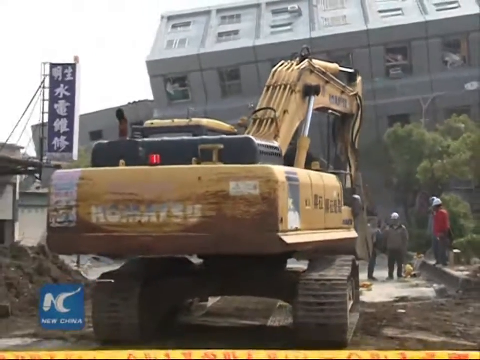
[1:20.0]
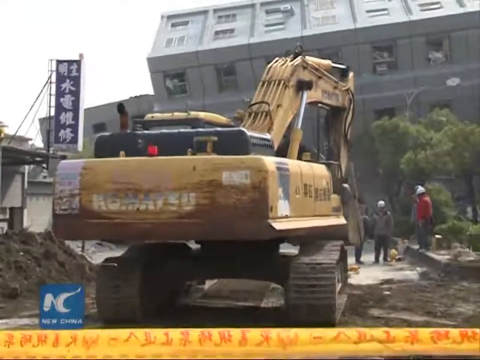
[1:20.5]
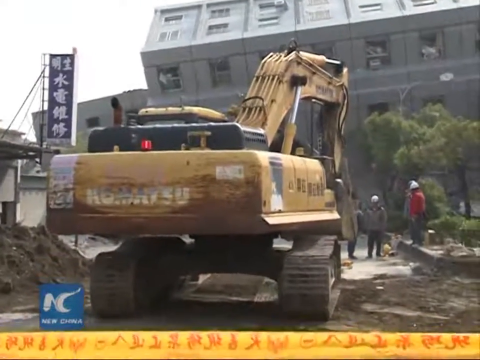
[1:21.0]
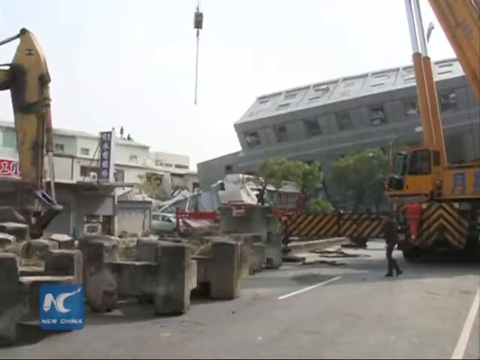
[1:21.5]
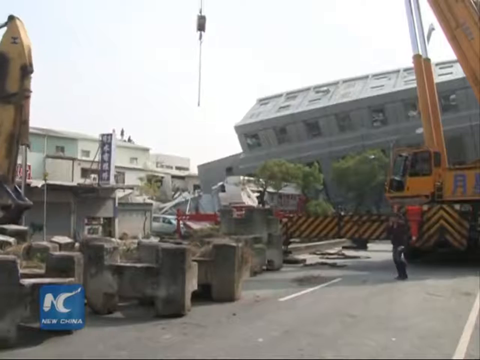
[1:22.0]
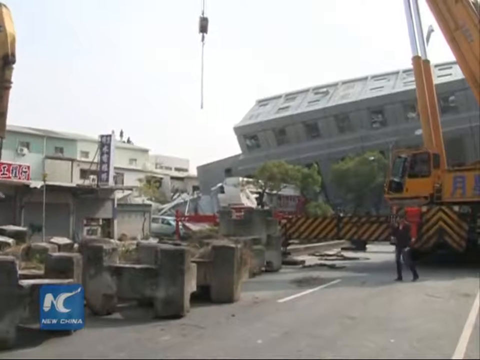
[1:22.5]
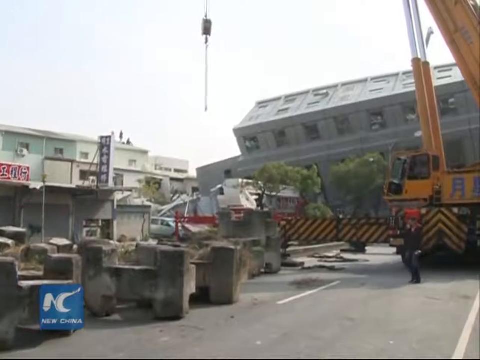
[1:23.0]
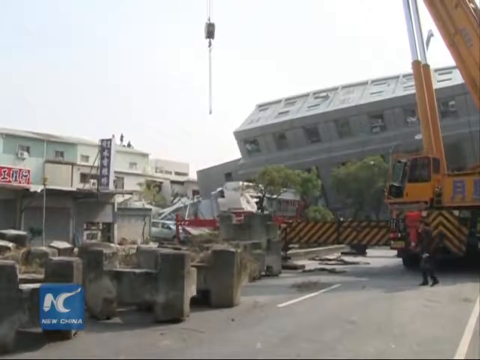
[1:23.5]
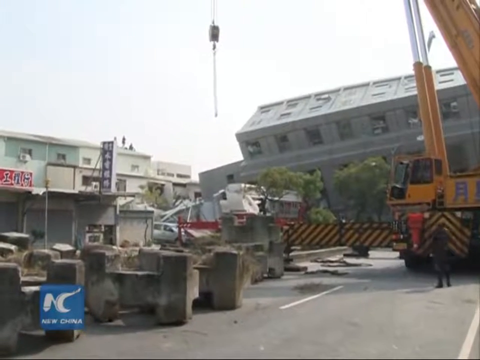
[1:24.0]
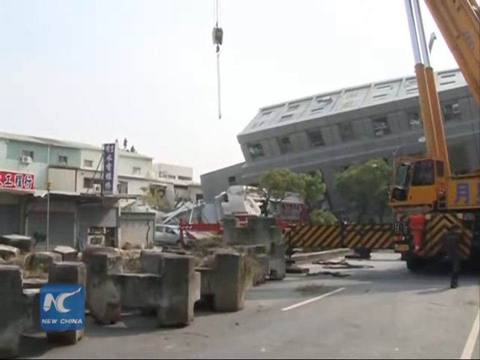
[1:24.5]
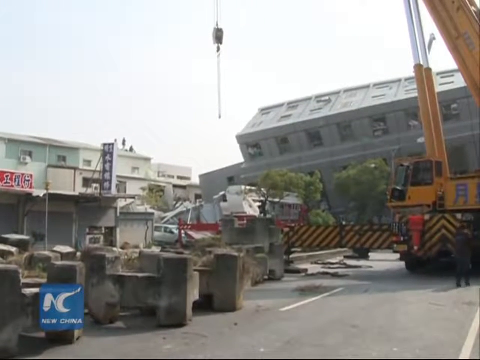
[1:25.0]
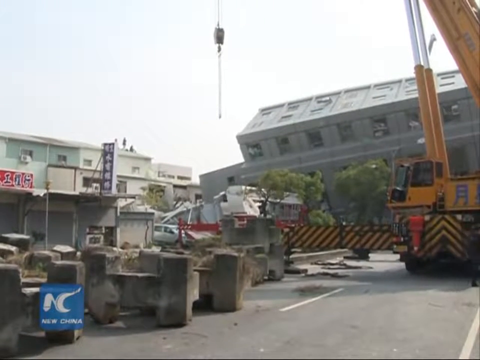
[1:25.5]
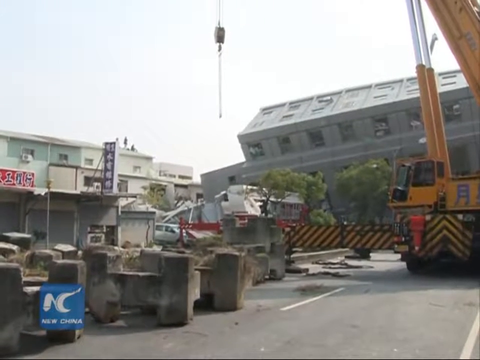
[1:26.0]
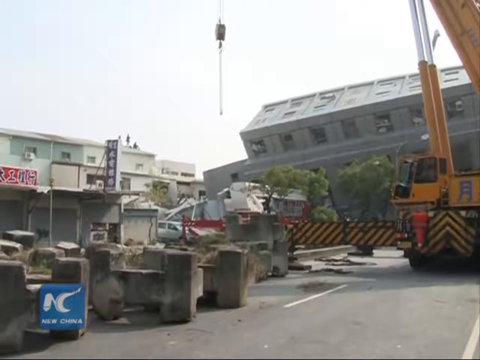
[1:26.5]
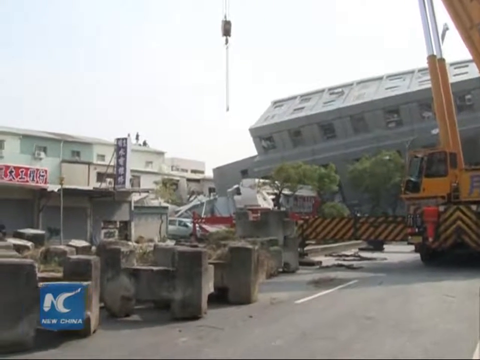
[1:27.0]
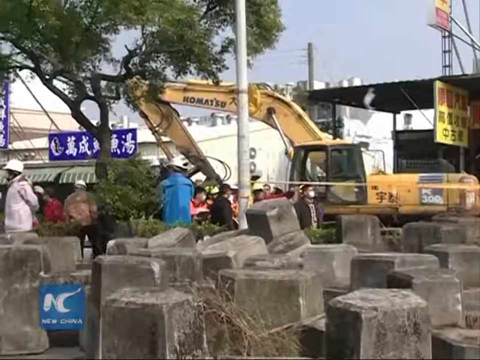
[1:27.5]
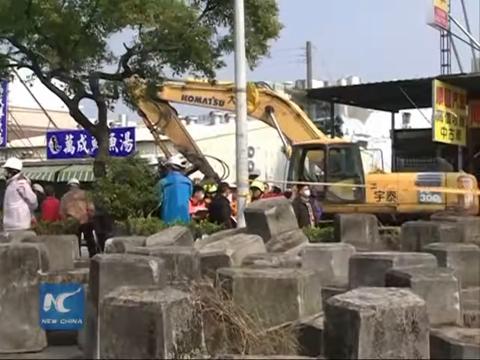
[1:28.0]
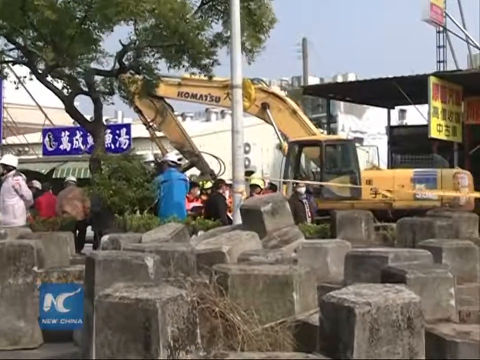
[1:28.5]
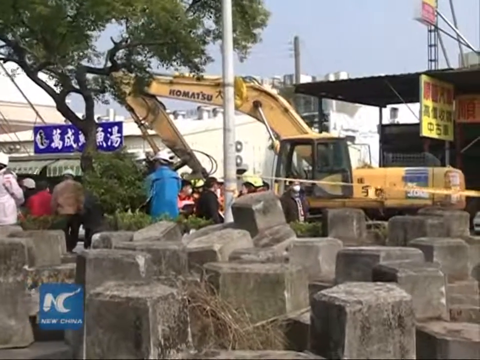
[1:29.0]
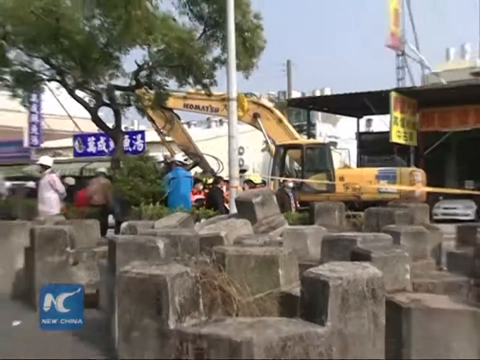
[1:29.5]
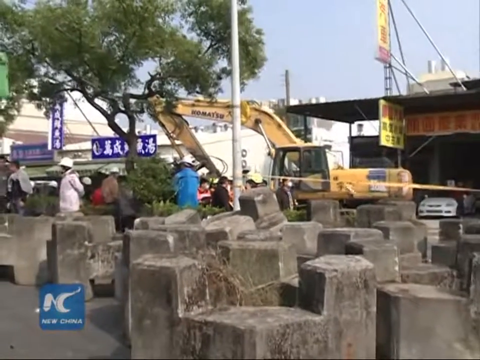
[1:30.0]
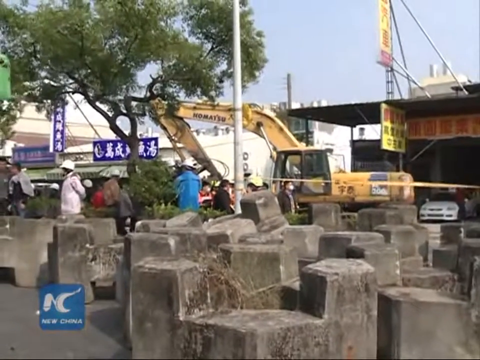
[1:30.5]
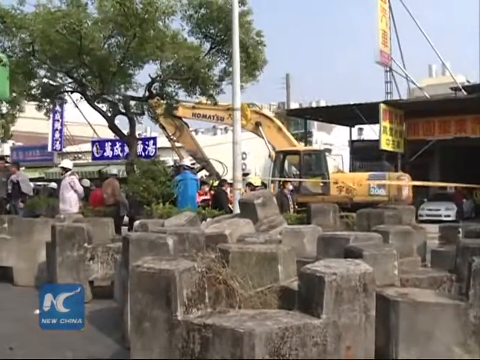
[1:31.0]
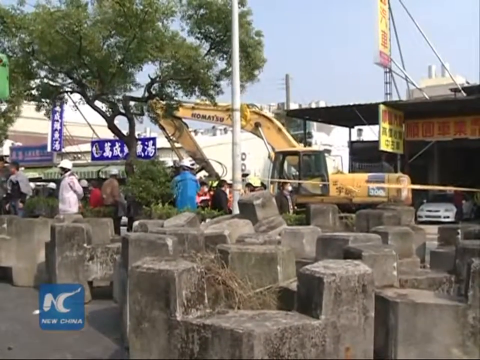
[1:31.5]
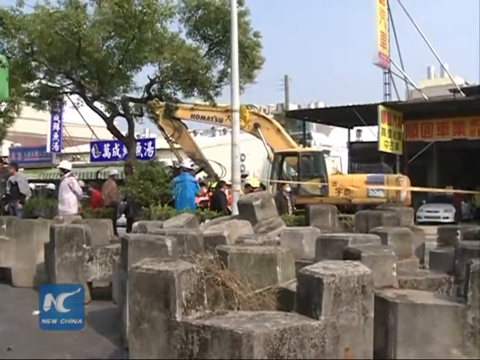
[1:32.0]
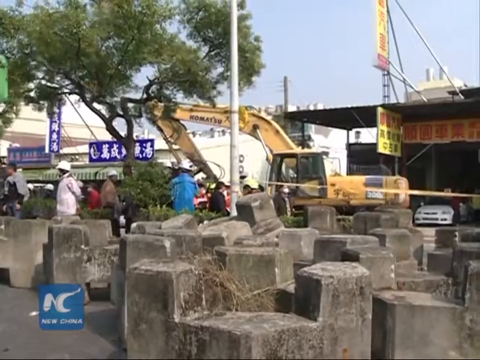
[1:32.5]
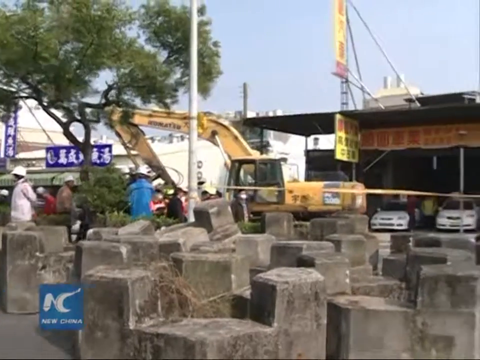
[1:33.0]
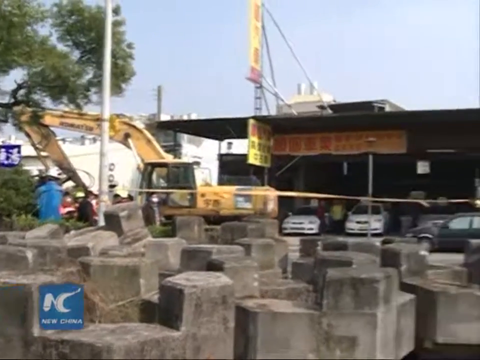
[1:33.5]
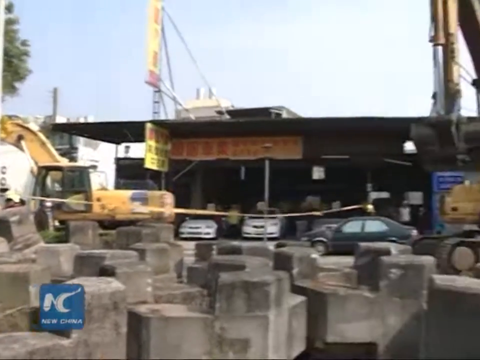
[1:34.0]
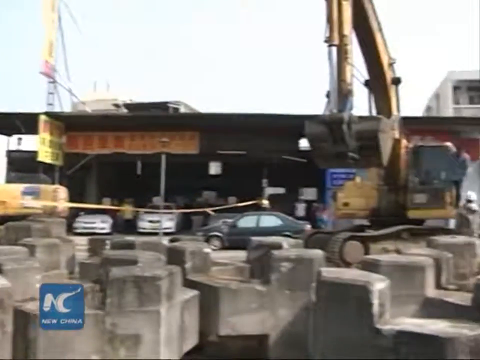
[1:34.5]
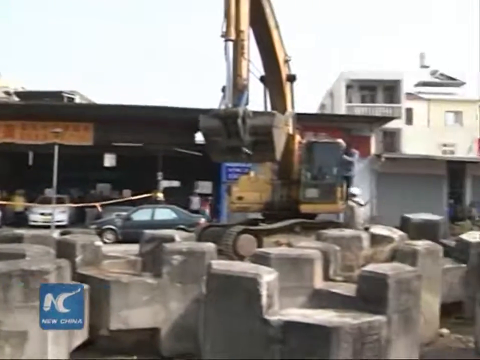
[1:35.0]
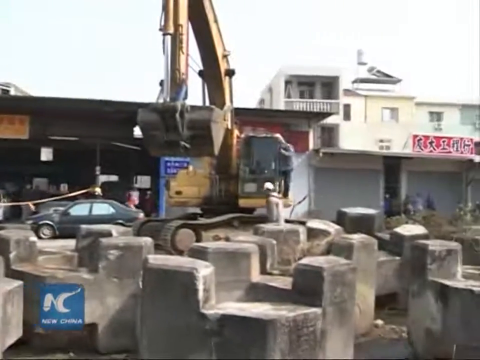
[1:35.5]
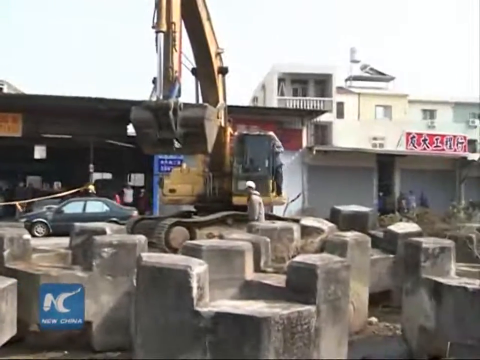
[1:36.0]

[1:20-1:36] An excavator drives slowly in front of what looks like a collapsed building. Construction workers wearing helmets are on the right side of the screen. There seems to be a small tree in front of the building, and a flag with Chinese text is on the left side of the screen in front of the building. The camera cuts to a wider view with two cranes partially visible on the left and right sides of the screen. In the centre, a component of a crane drops down, while the collapsed building is more on the right side; the building on the left seems unaffected. Next, some 'moulded' concrete blocks are at the bottom of the screen, and in front of them people are gathered beside an excavator, with a white building and a power cable in the background. A tree is on the left side of the screen where the people are gathered. A slightly wider view of the building follows, and the camera pans right to reveal more of the areas around it.